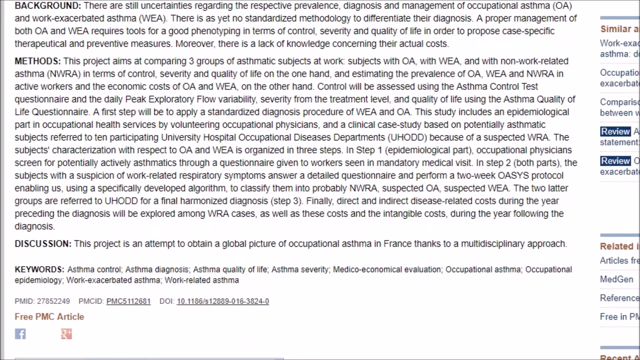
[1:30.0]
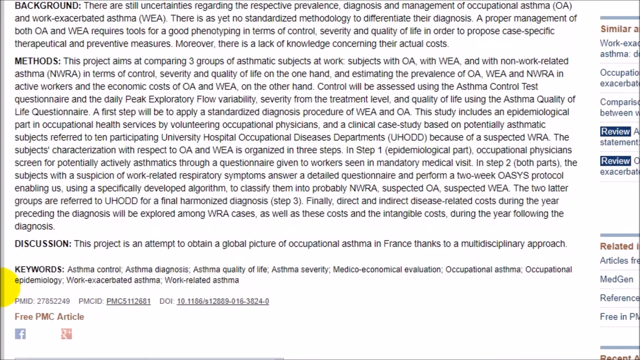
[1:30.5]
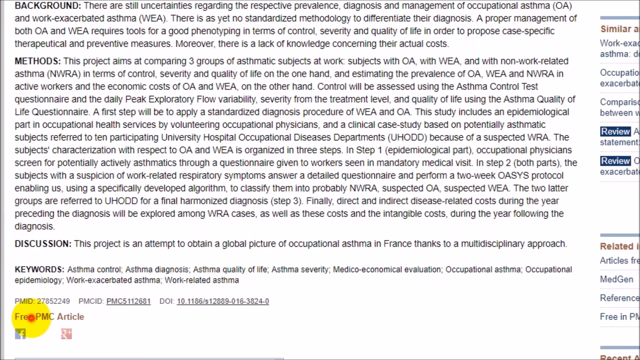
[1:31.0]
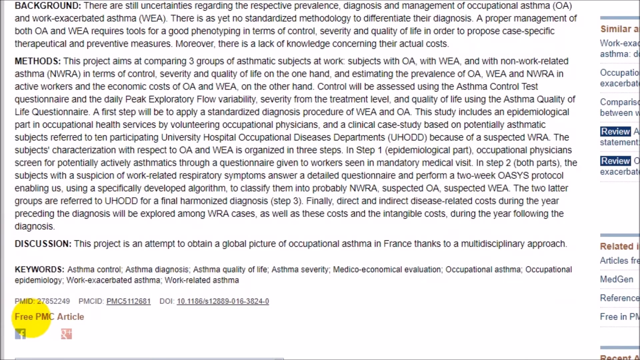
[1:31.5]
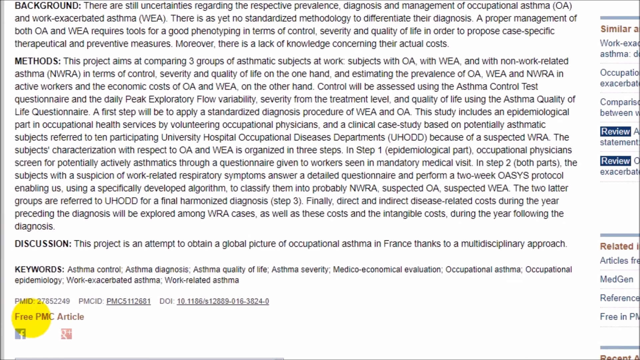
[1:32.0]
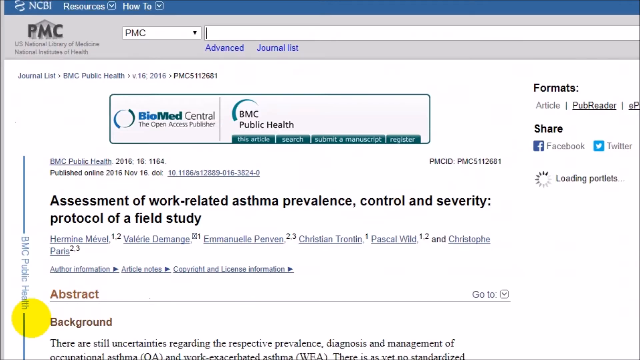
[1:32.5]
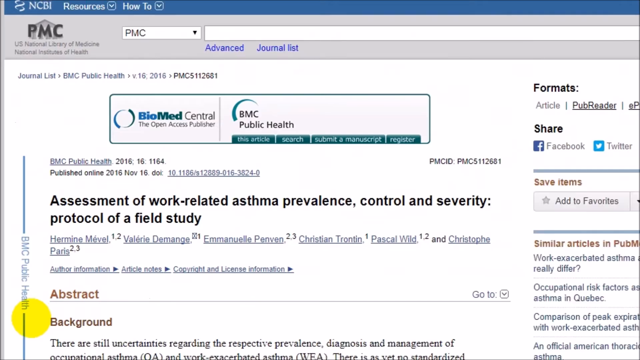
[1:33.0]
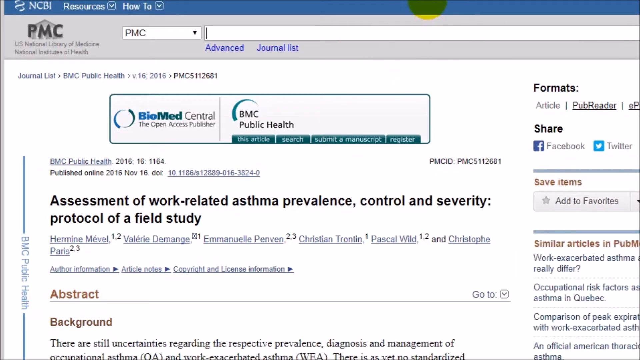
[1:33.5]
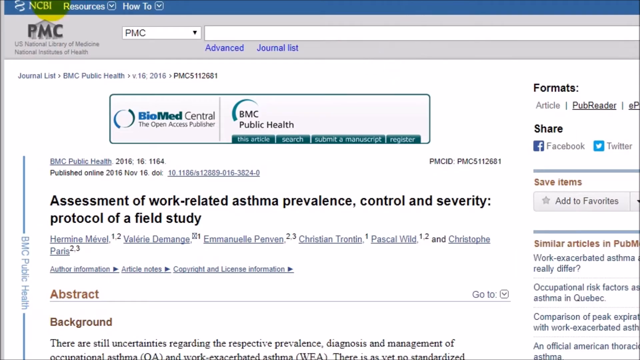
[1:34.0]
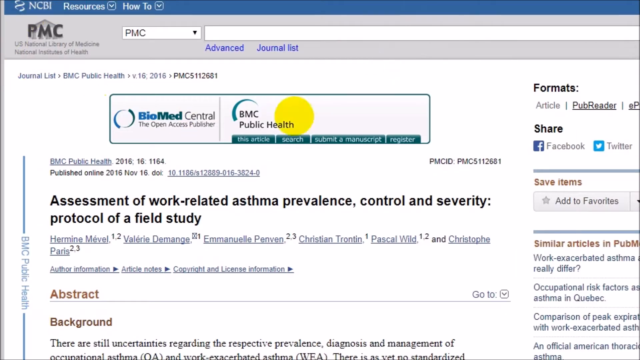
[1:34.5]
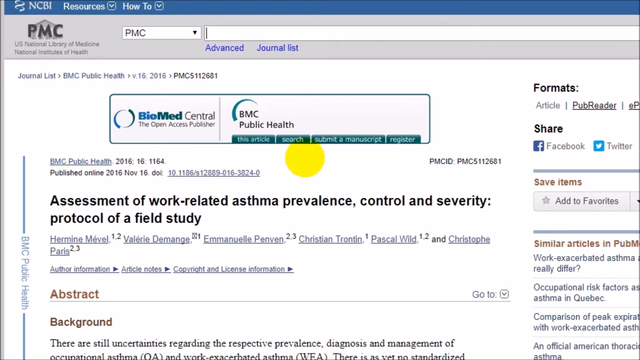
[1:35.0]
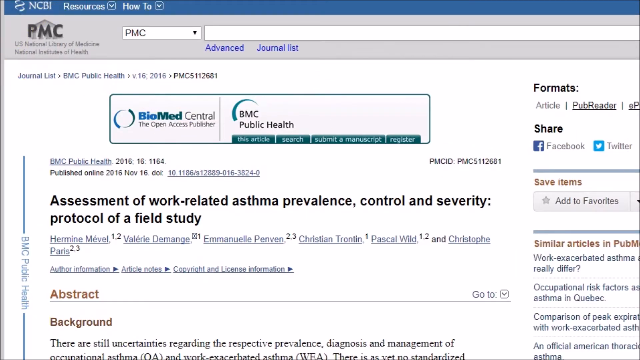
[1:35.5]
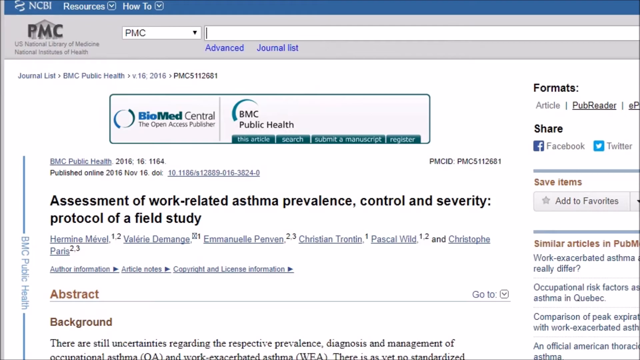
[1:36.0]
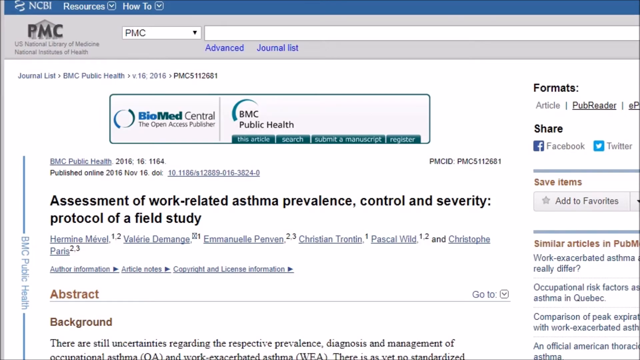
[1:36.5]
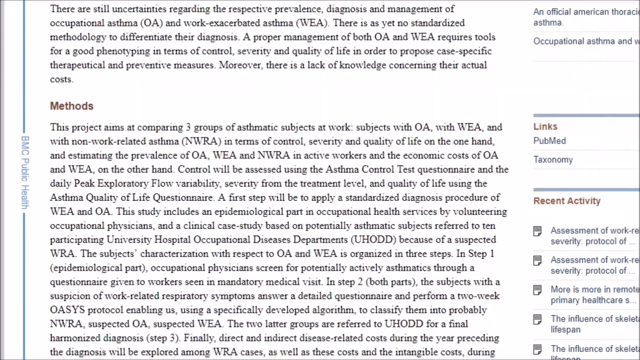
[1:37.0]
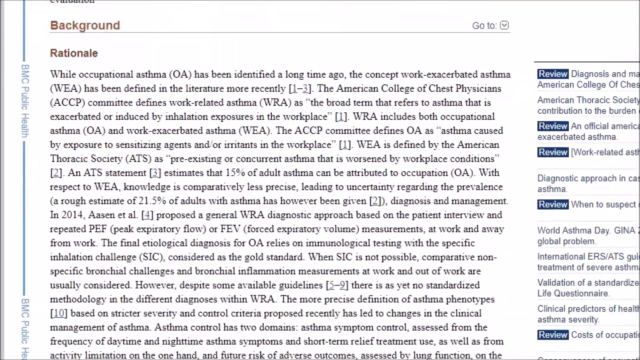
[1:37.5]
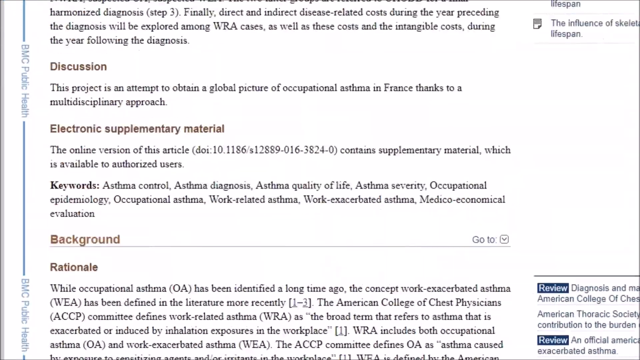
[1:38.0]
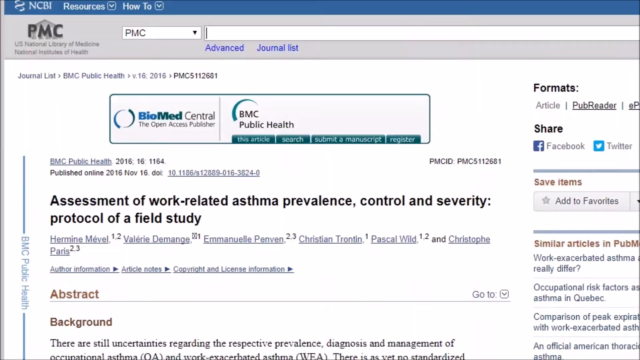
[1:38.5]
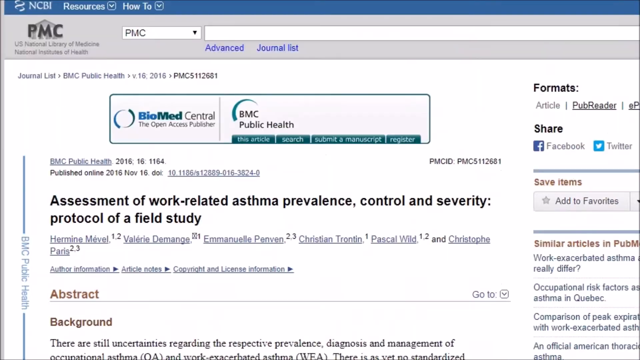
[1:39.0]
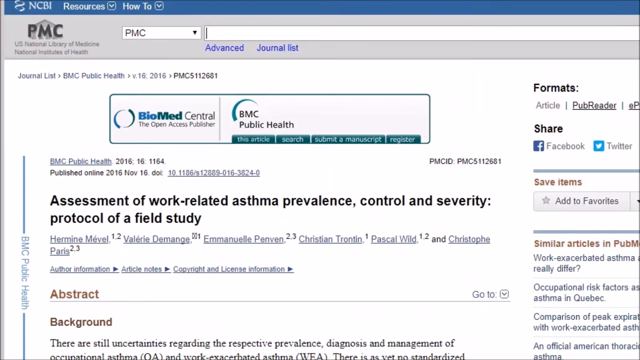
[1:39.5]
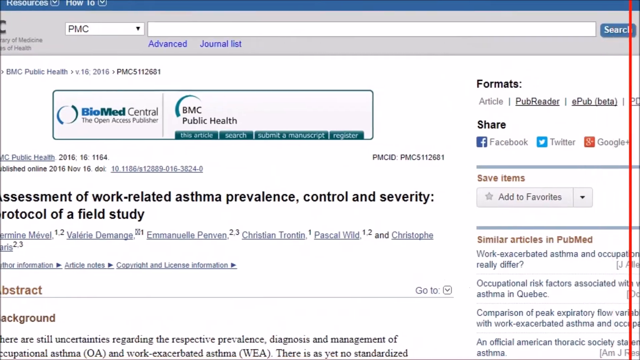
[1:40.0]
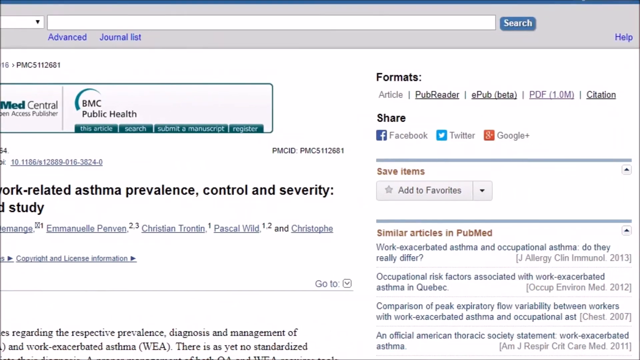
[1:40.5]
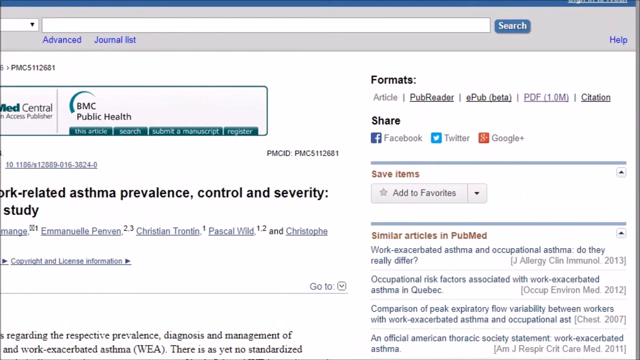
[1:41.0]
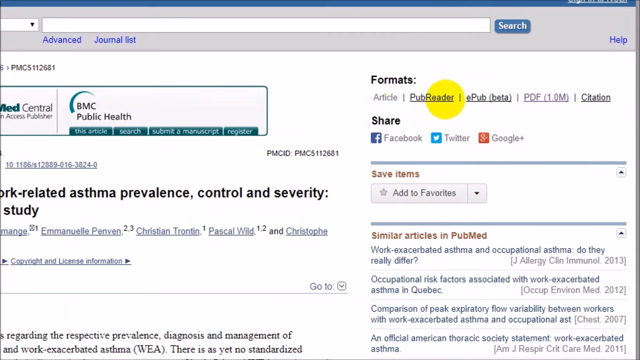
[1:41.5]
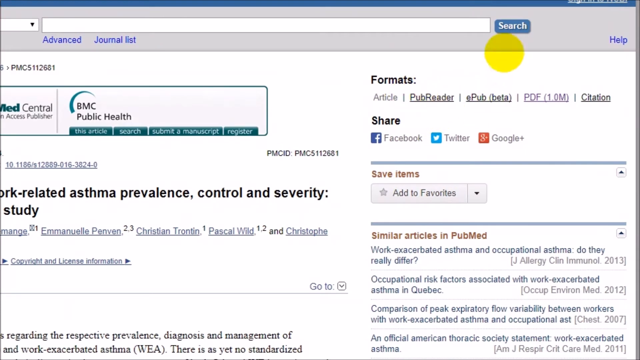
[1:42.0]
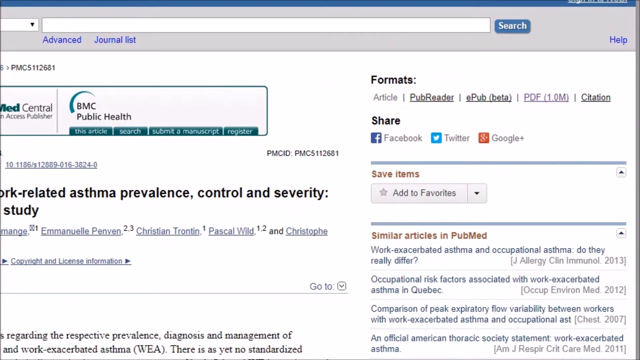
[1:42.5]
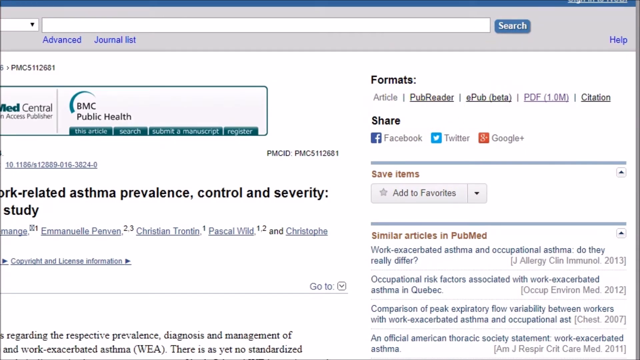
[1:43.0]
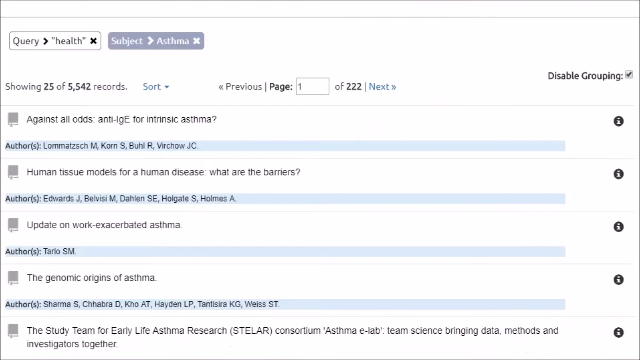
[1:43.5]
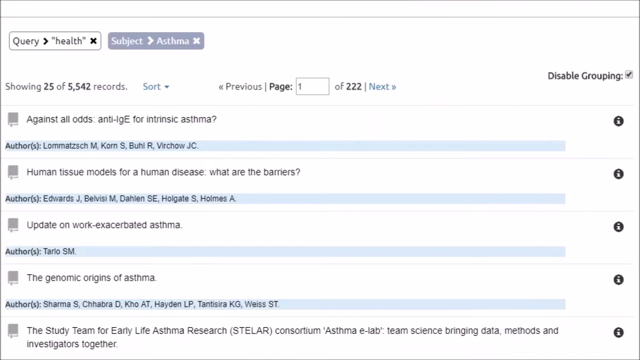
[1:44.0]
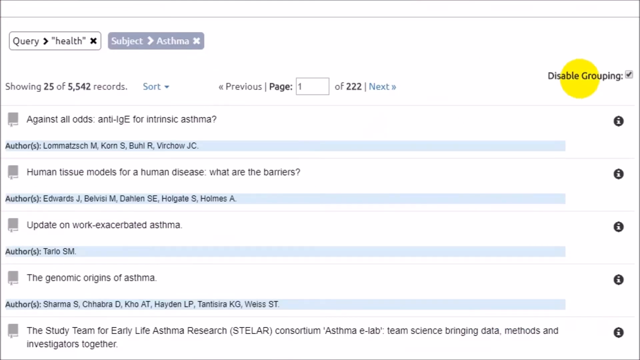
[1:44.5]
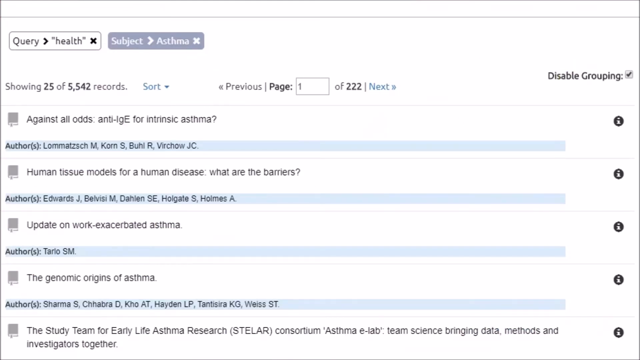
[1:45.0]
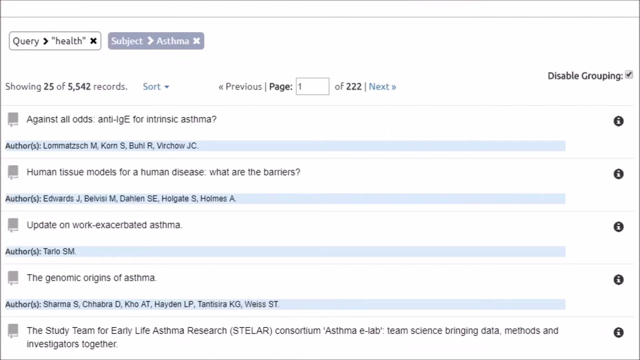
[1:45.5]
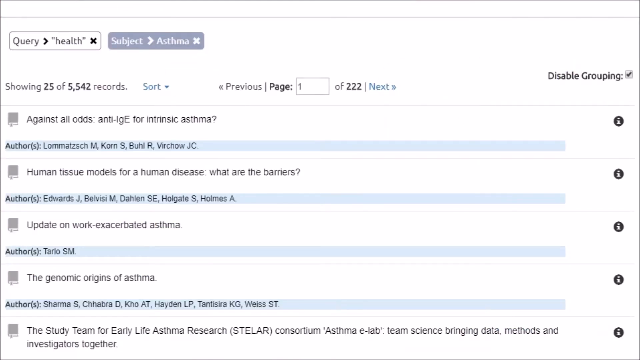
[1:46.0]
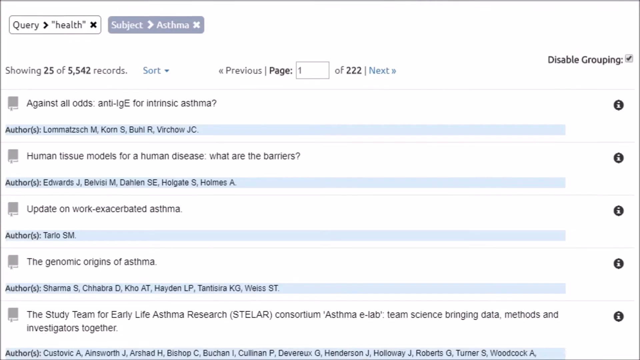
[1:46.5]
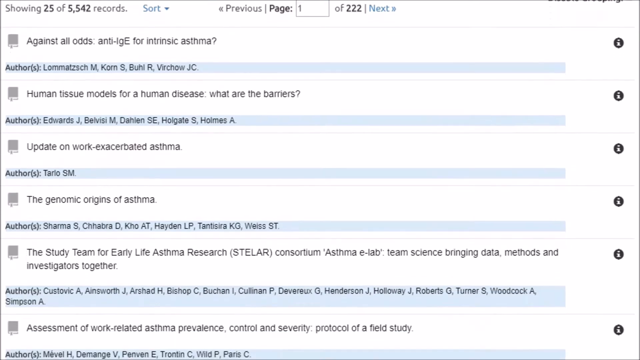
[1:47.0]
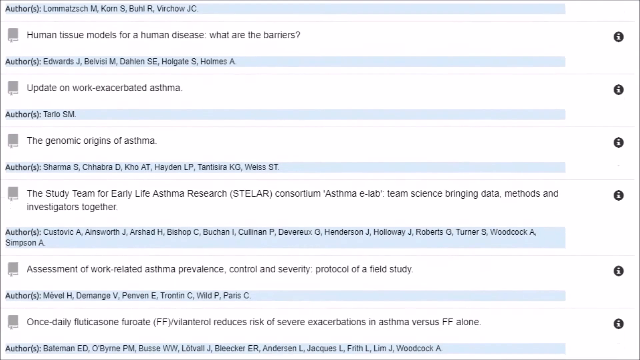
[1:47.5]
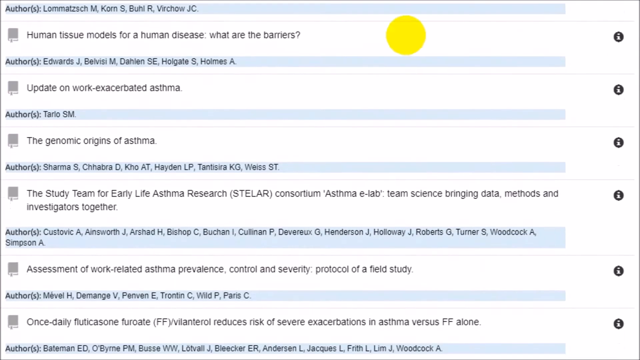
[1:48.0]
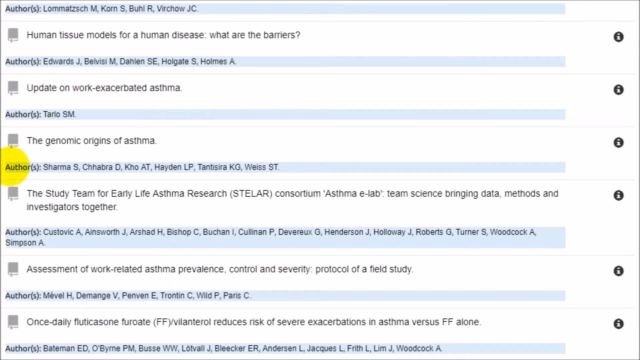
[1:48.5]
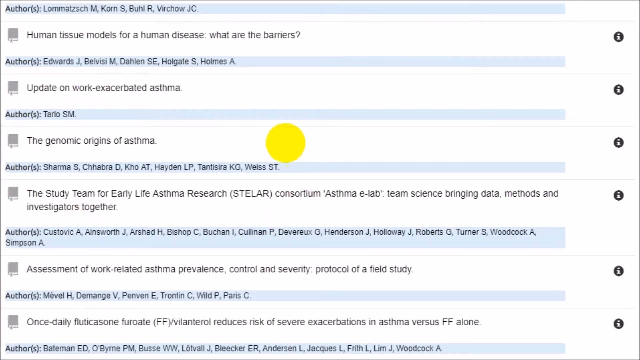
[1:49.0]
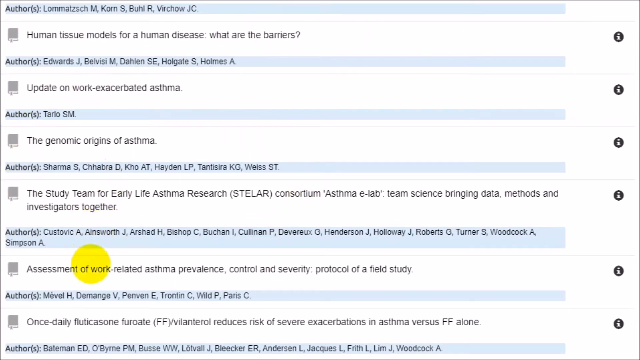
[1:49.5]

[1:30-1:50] The opened article is somewhat extensive, with a title that reads "Assessment of Work-Related Asthma Prevalence, Control and Severity, Protocol of a Field Study". One of the authors or collaborators is named Hermine Mevel. The abstract is somewhat extensive, but the user focuses more on showing the easy access to the information below, such as the ID or DOI, keywords, references and more. The user then moves to the top of the page and returns to the list of search results, explores a little more, and seems about to click another article or book result when the video cuts abruptly.